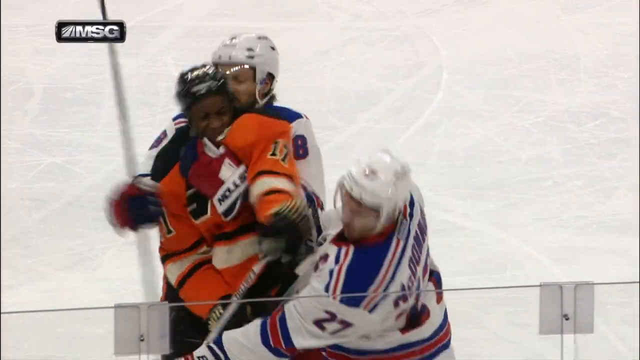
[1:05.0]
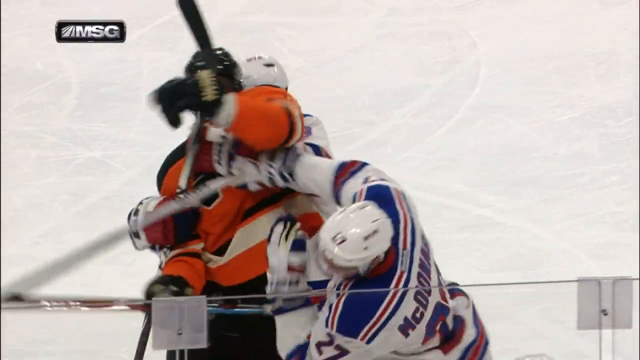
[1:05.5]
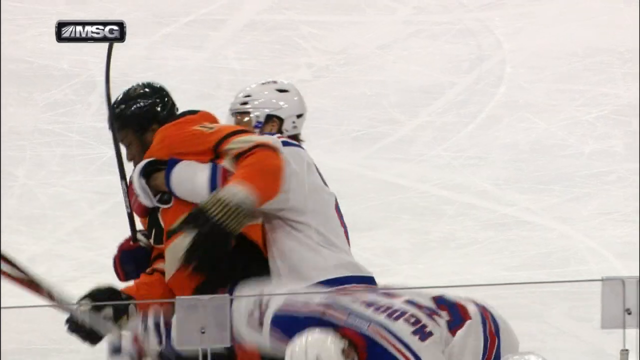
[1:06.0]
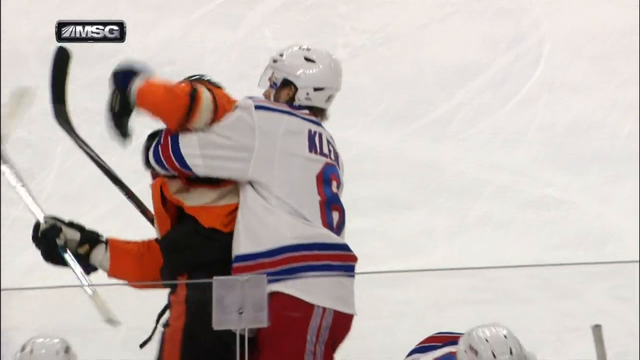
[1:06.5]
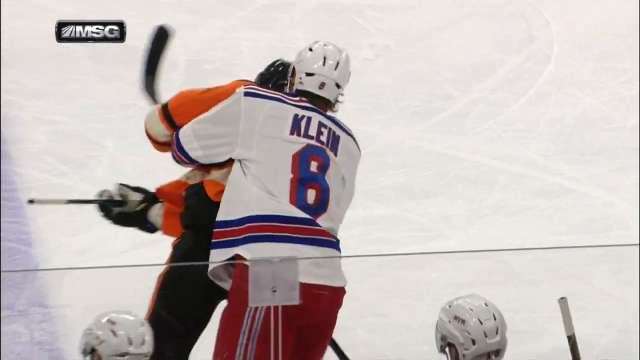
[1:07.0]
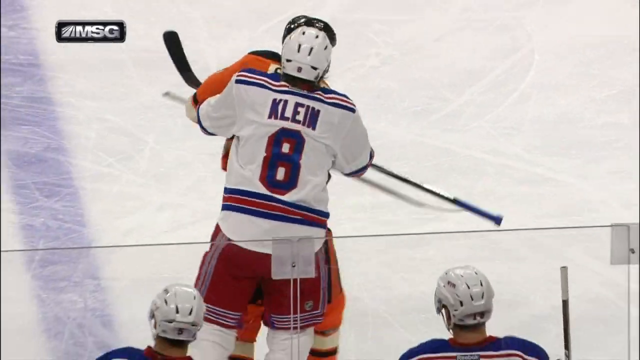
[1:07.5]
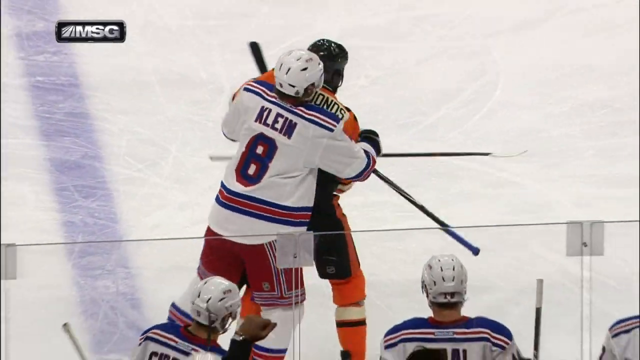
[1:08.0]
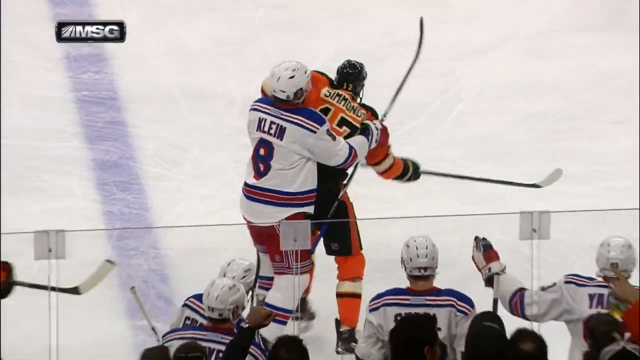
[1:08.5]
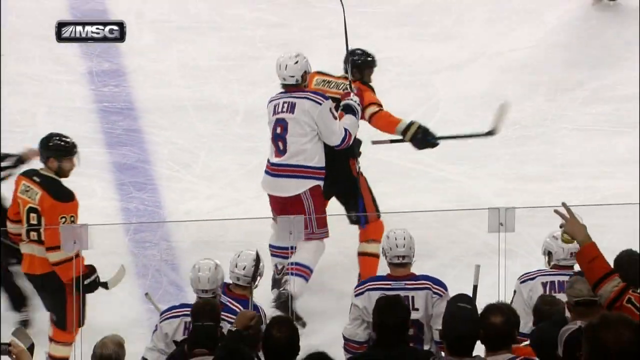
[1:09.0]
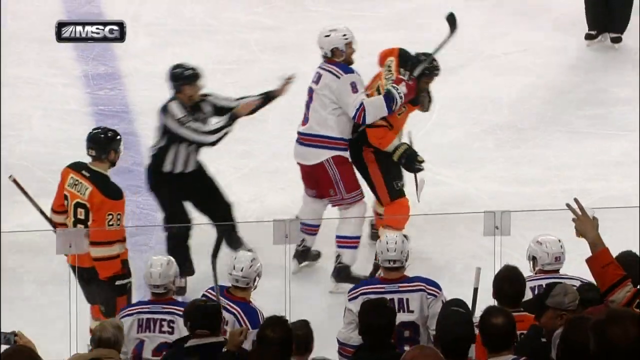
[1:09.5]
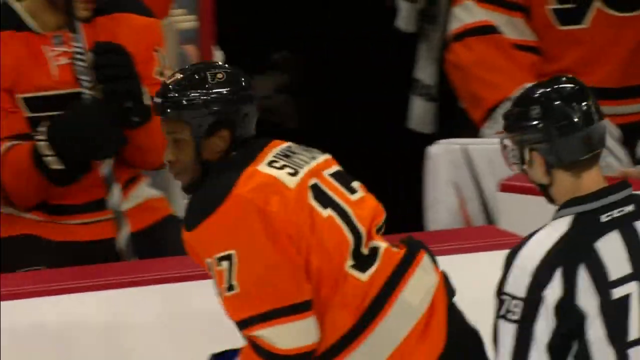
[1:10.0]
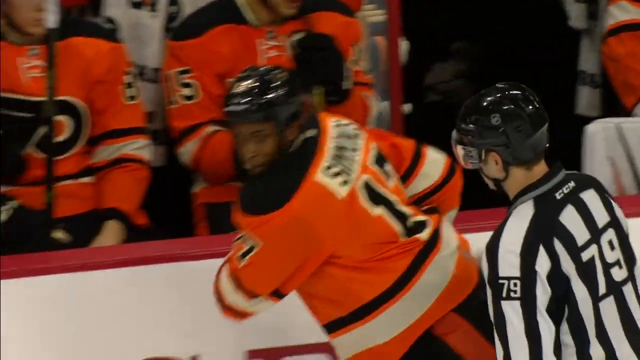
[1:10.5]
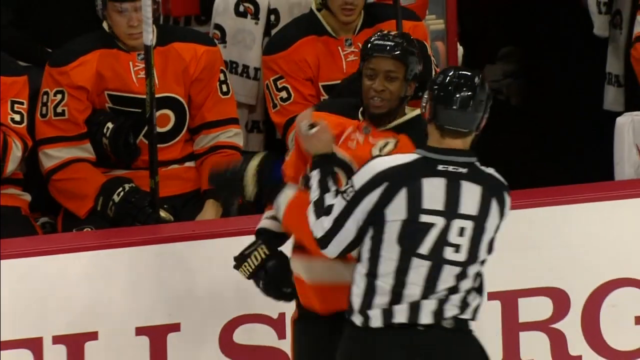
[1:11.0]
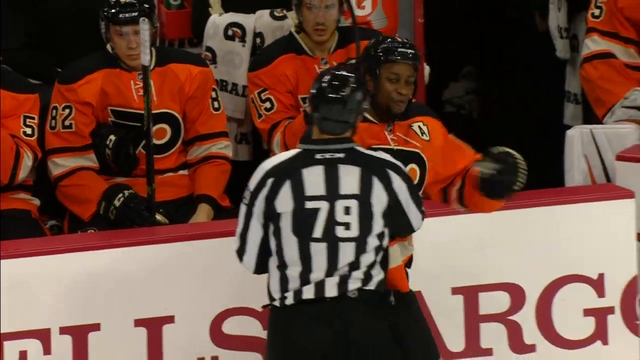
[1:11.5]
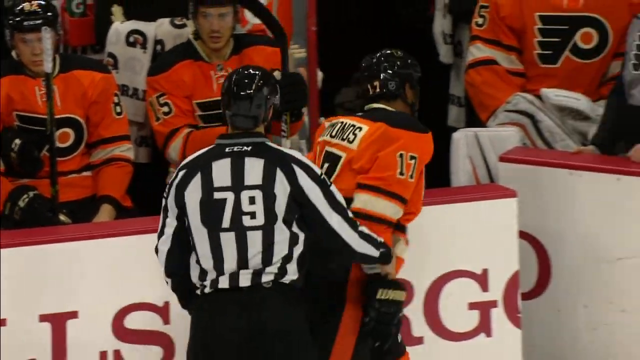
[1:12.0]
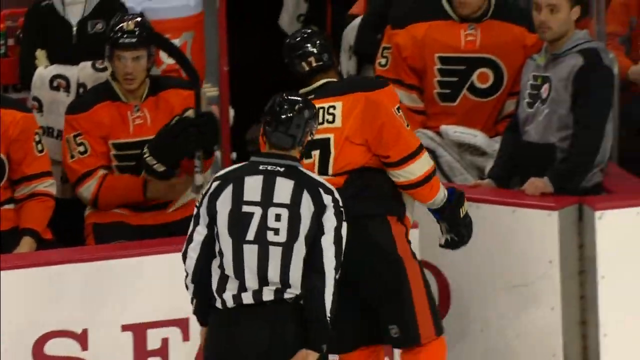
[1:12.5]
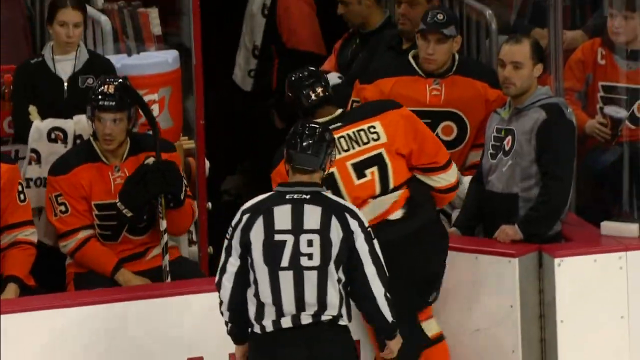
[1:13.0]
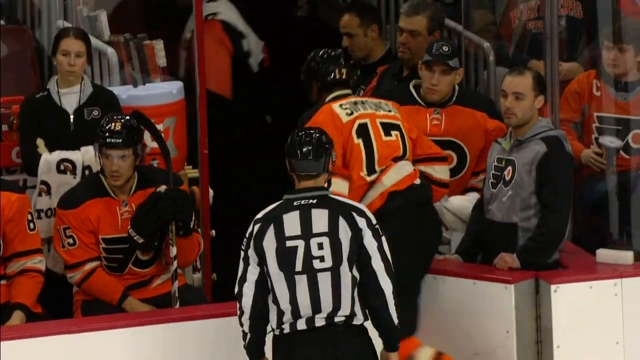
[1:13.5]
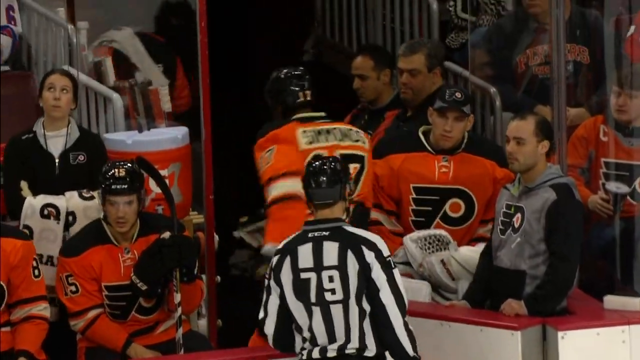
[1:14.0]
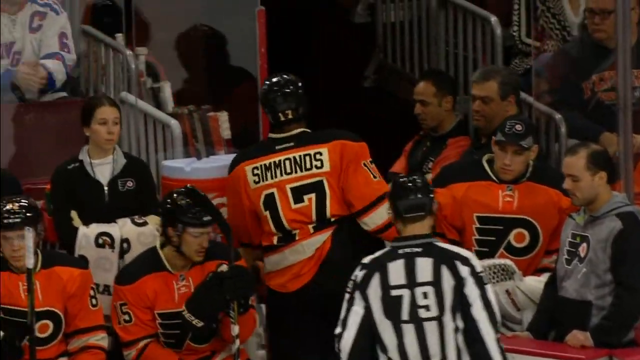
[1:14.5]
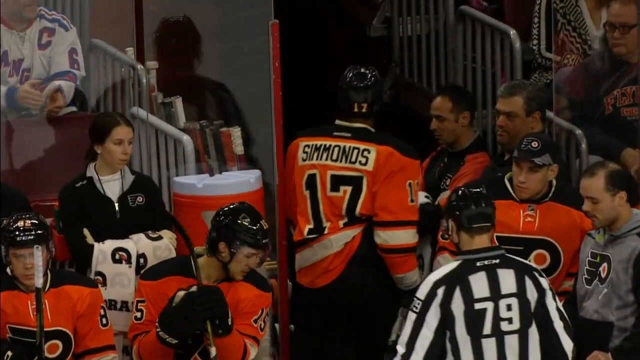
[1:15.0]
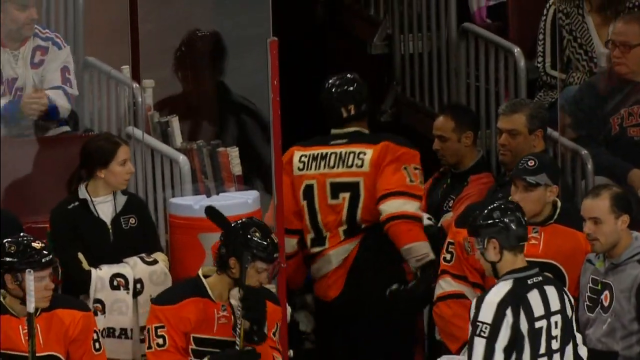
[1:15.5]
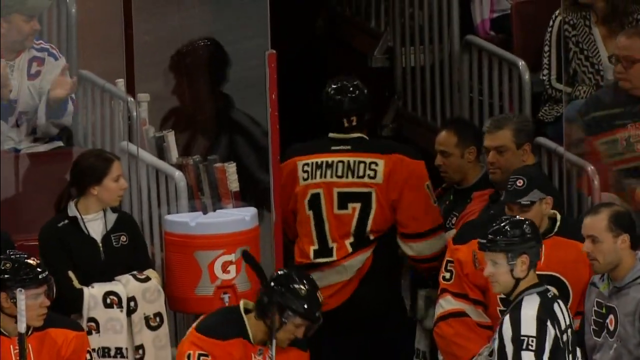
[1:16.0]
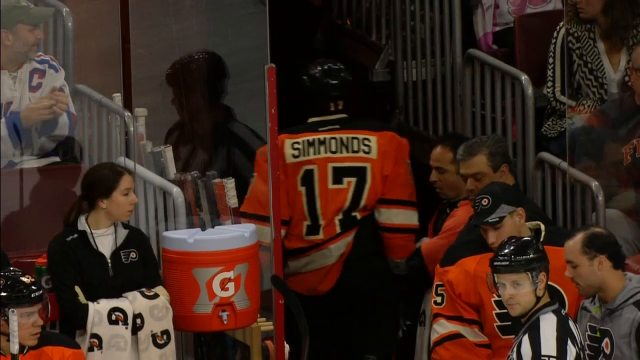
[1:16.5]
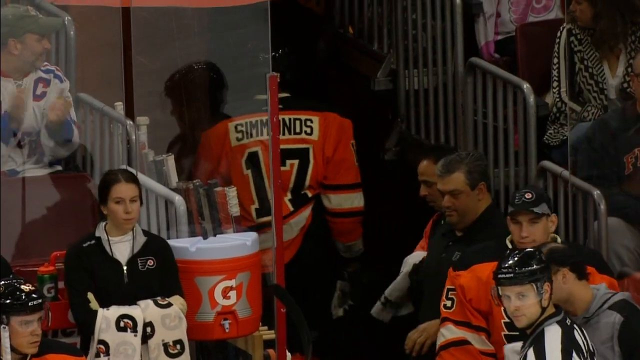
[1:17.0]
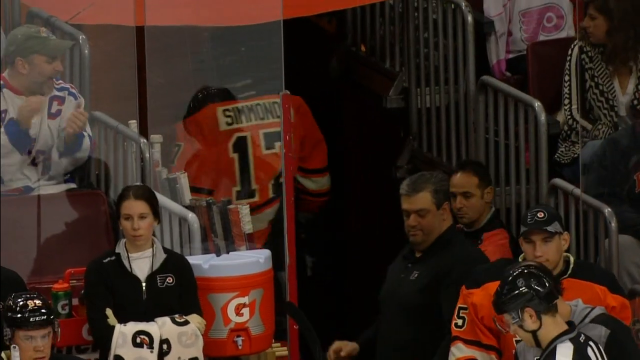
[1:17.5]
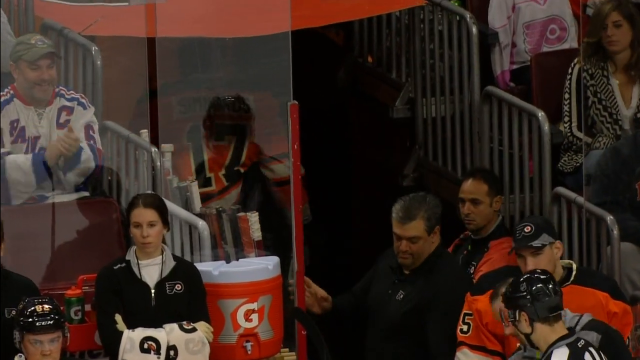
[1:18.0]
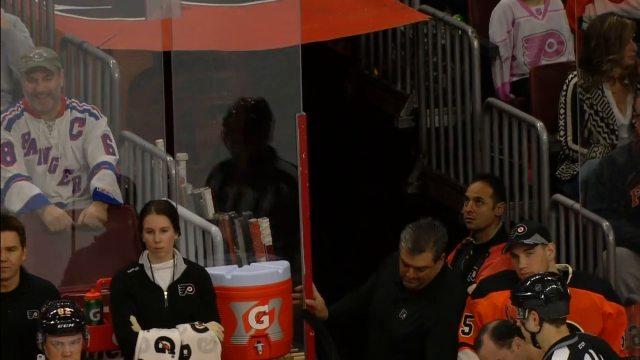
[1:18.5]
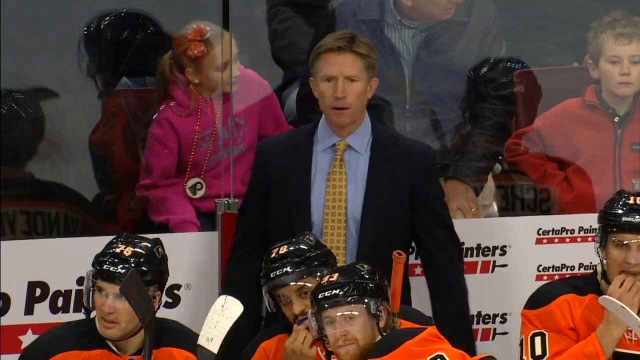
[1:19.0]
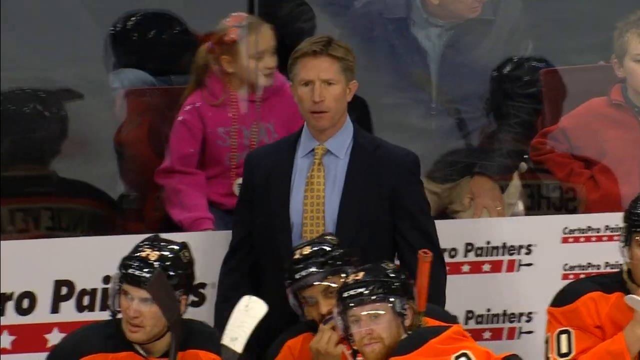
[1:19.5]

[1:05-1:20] Titled Gotta See It, Simmonds Ejected for Interference, the video shows one of the coaches, then a player named Kline, pulling Simmonds off, and the referee ejecting him from the game. Simmonds walks off toward the locker room. It almost looks like Simmonds is going to hit the referee before being made to leave the rink, in a heated exchange. A person supporting the opposing team claps as Simmonds is ejected. The orange and black team looks like it might be the Philadelphia Phillies, and the team in red, white and blue uniforms is possibly the Rangers.